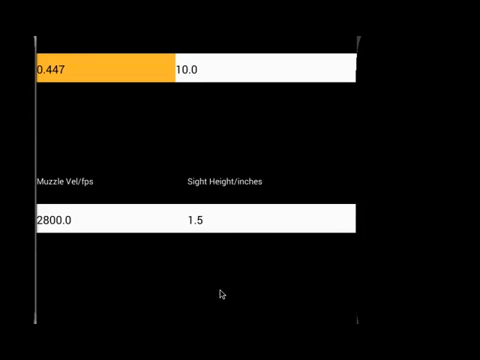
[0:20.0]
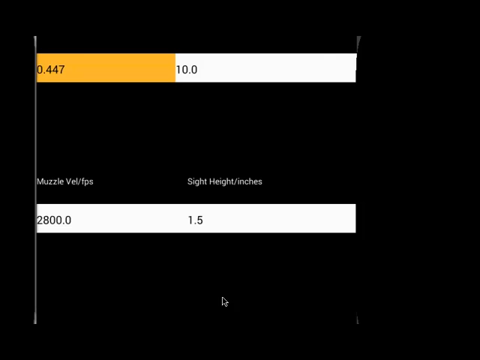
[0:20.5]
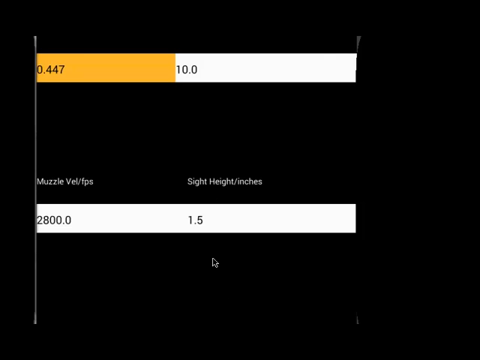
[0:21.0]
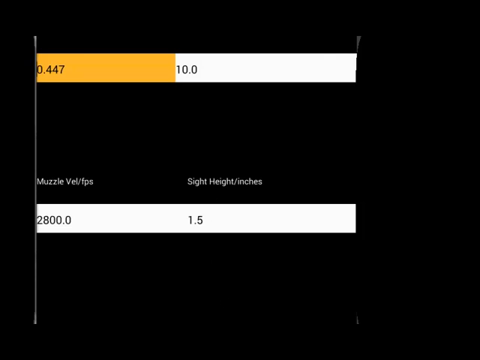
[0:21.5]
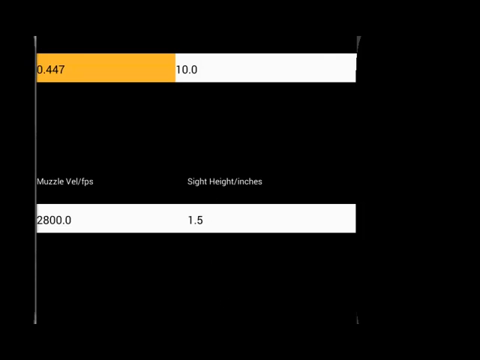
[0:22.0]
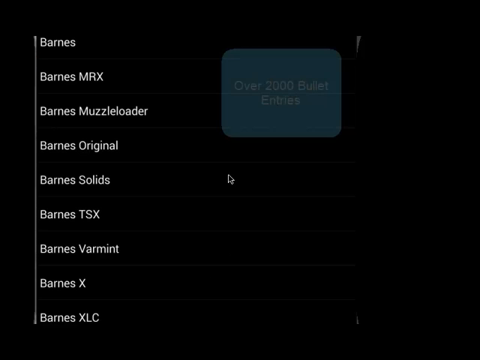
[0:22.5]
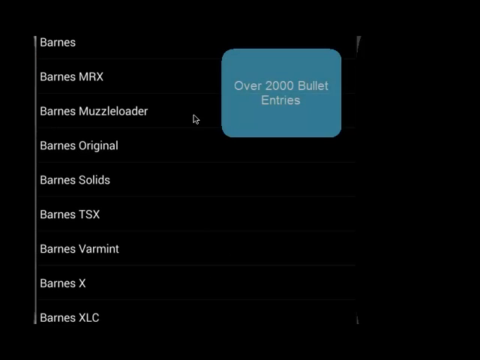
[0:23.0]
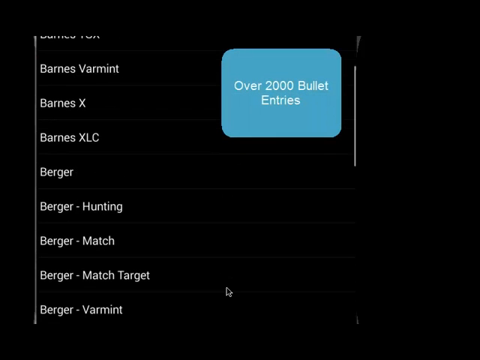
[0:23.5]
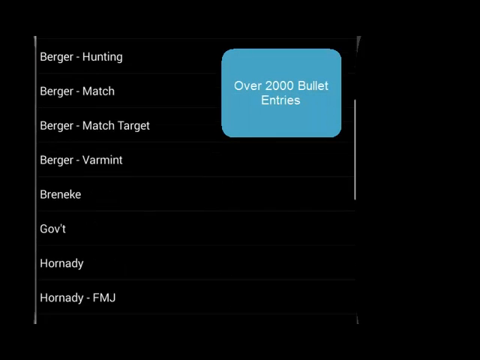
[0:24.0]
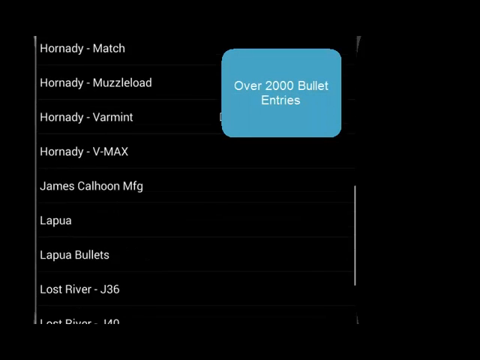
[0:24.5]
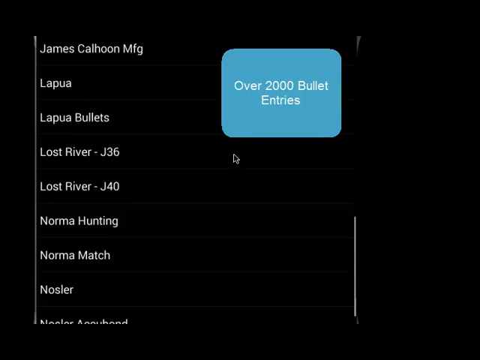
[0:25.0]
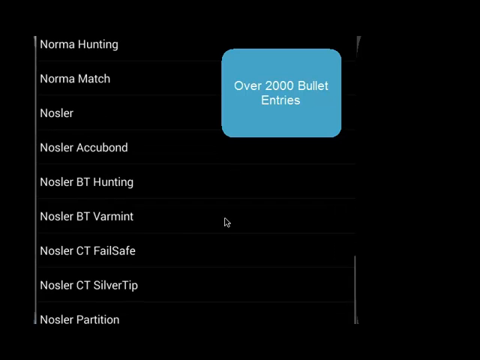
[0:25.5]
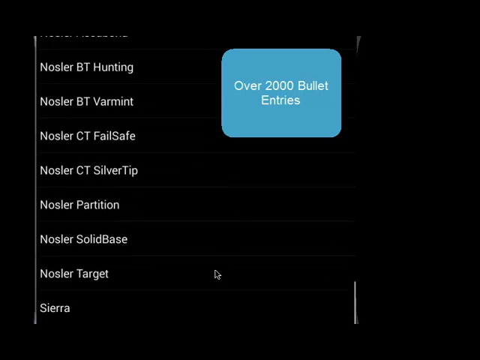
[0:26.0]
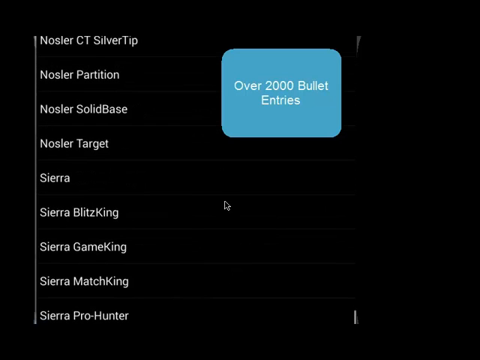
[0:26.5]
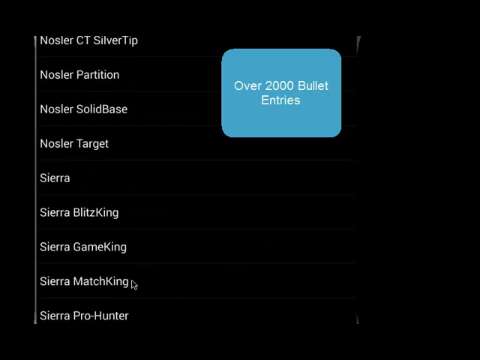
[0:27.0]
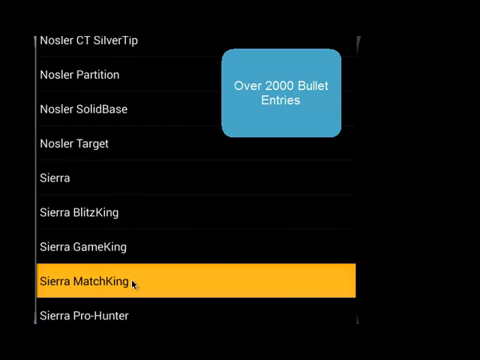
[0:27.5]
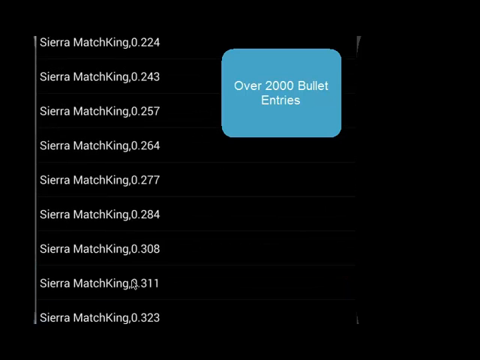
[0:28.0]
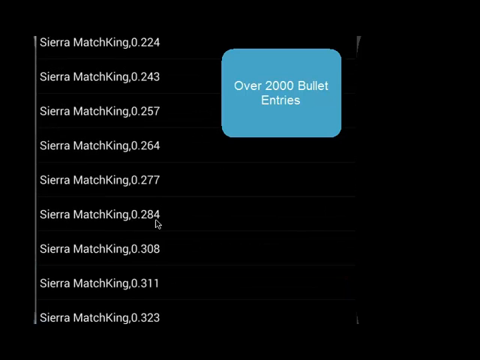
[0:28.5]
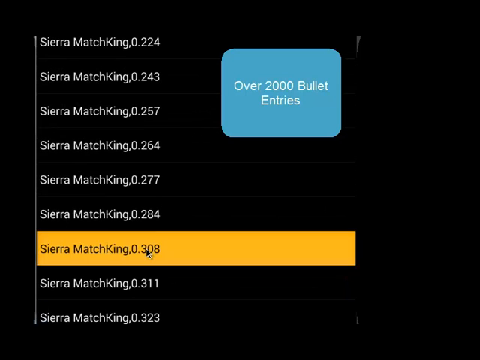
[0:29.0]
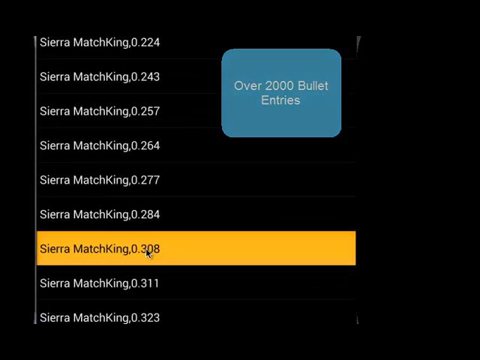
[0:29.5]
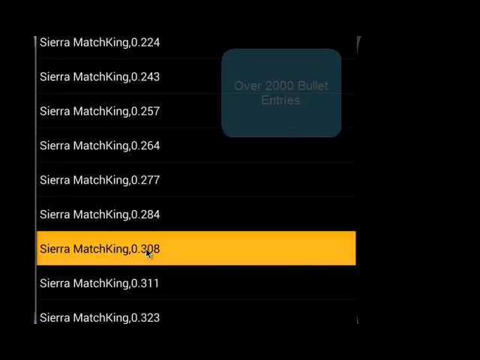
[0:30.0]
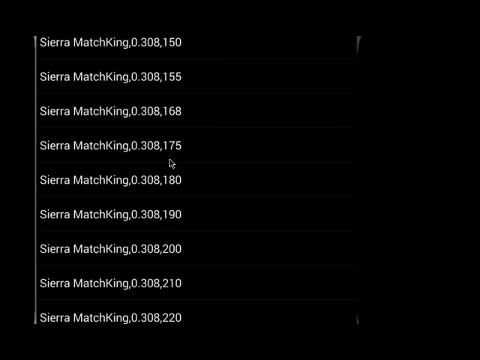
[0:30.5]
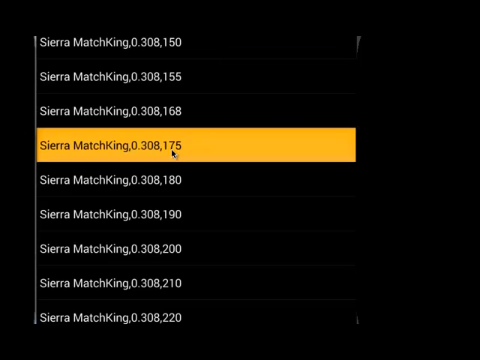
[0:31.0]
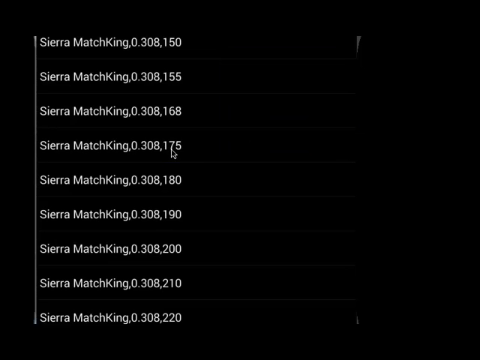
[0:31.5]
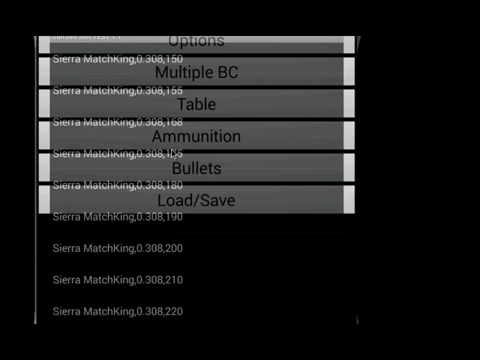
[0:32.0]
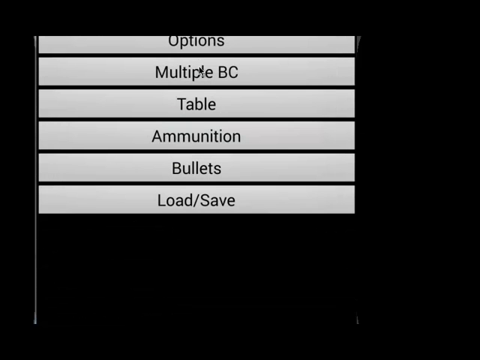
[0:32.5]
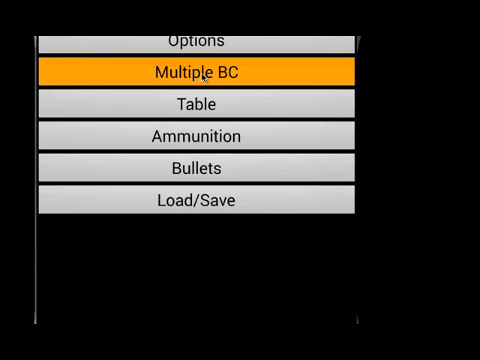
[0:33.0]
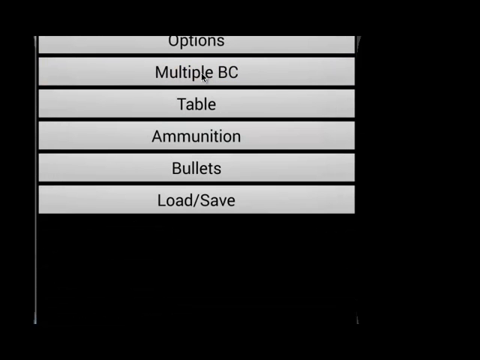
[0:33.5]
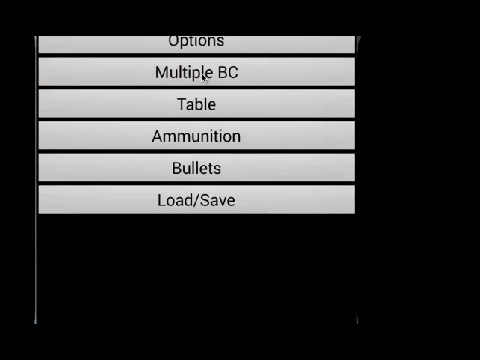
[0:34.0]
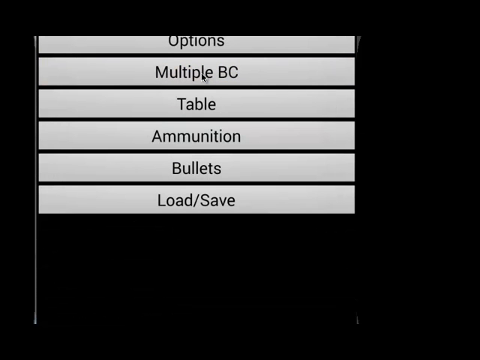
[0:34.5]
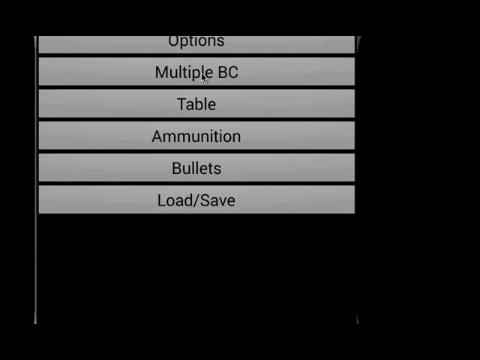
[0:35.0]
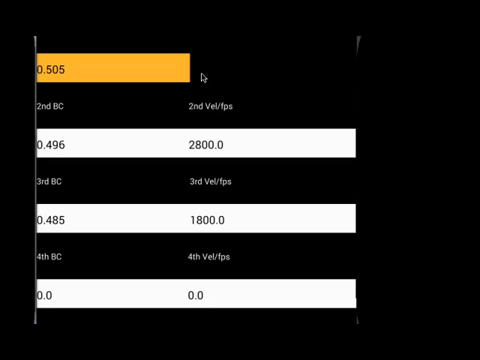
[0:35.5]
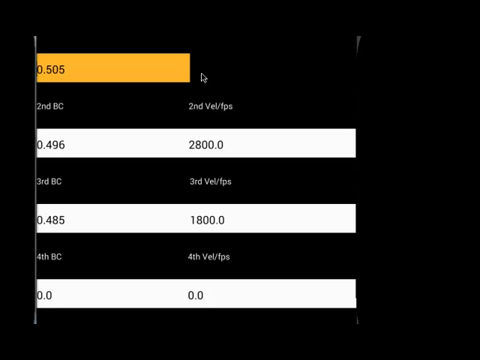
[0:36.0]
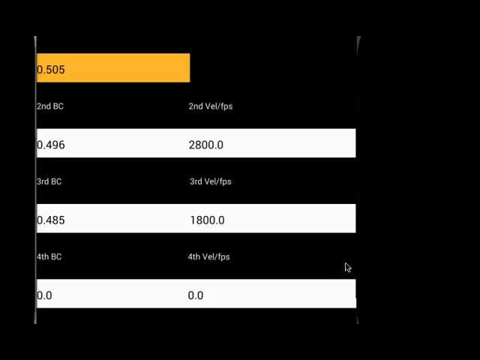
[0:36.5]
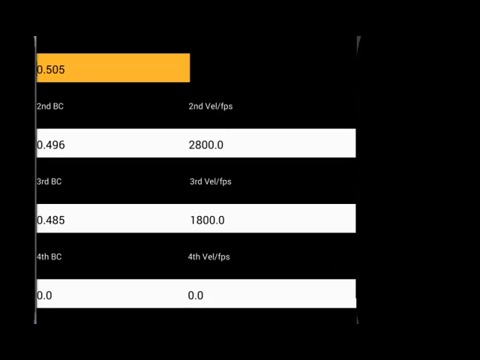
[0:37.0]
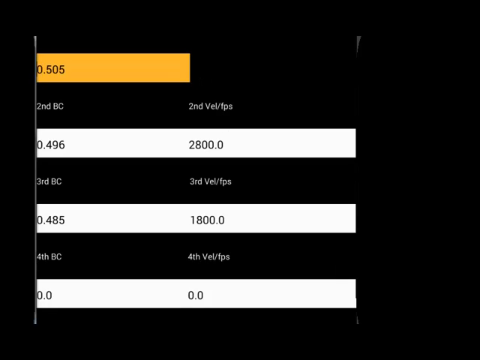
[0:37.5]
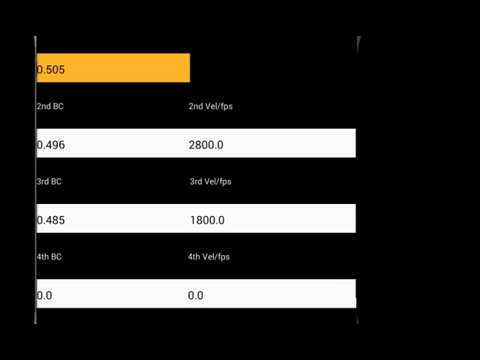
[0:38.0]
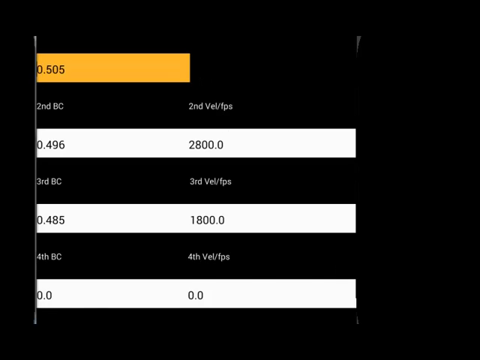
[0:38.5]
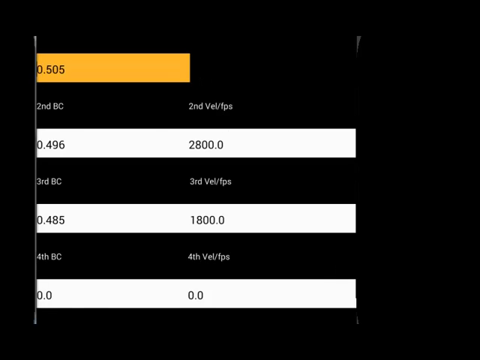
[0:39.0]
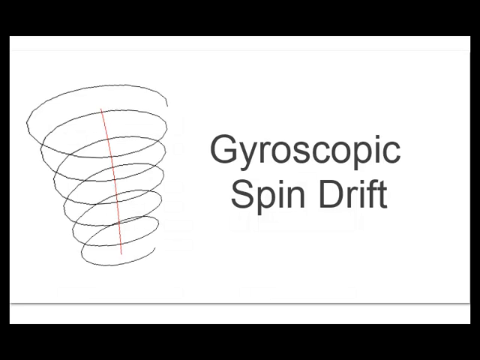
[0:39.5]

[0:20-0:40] The screen seems to show the options for the gun selected earlier, the Remington Shotgun, and a person apparently moves a black mouse cursor through the options. At the top, a bar shows .0447 out of 10; the 10 part is white while the other part is orange. At the very bottom, "Muzzle Vel / FPS" is at 2800 and "Sight Height / Inches" is 1.5; this seems to be adjusting for the quality or the range of the shotgun. It then goes to another screen where the list, in alphabetical order, is scrolled far down to the S's. A box in the middle says "over 2000 bullet entries". Sierra Match King is selected, then Sierra Match King 0.308, and then 0.308.175. Options are shown for Office, Multiple PC, Table, Ammunition, Bullets, and Load and Save.